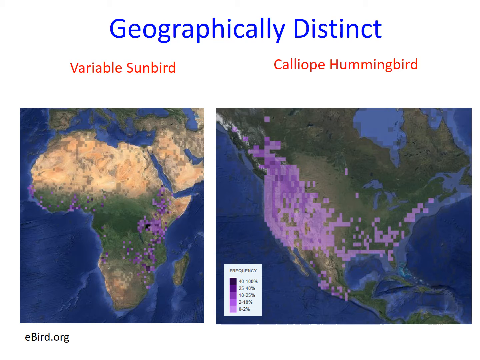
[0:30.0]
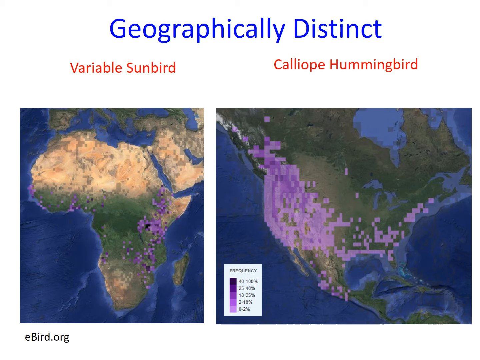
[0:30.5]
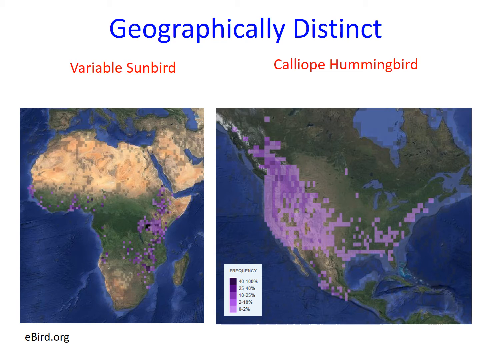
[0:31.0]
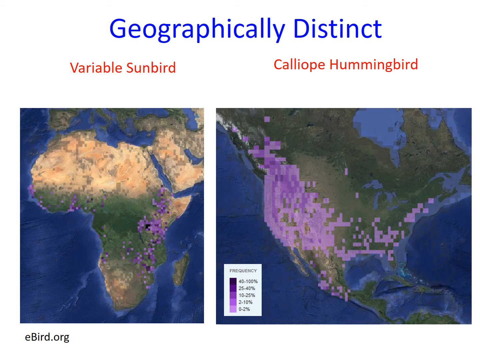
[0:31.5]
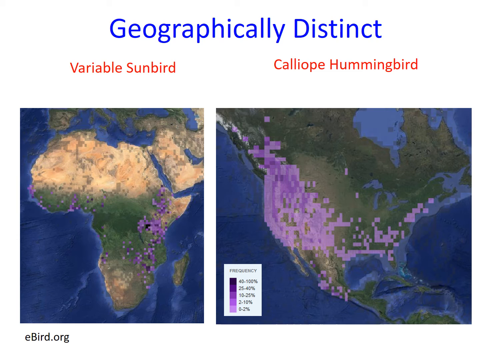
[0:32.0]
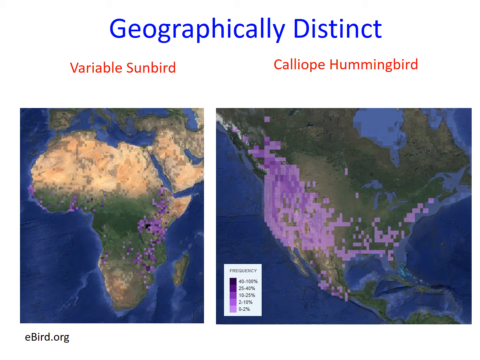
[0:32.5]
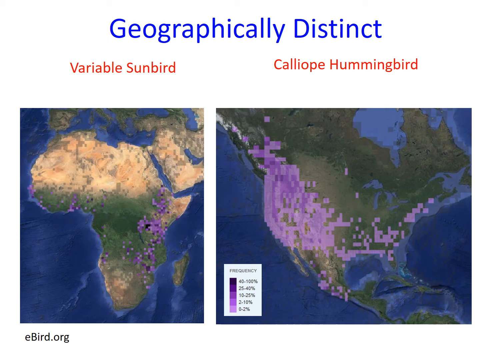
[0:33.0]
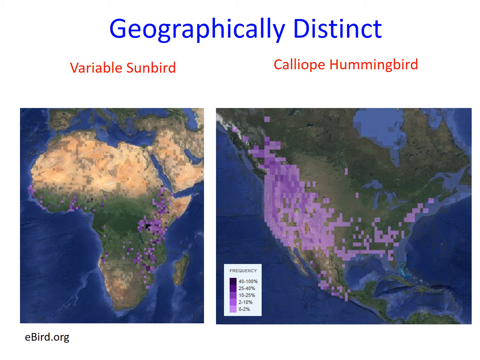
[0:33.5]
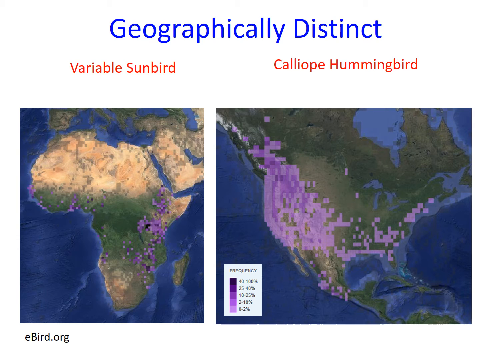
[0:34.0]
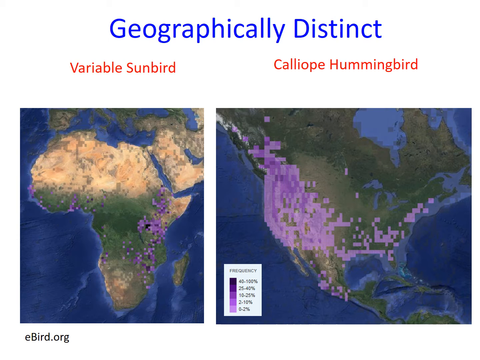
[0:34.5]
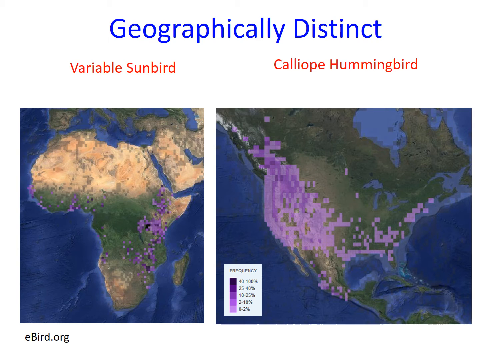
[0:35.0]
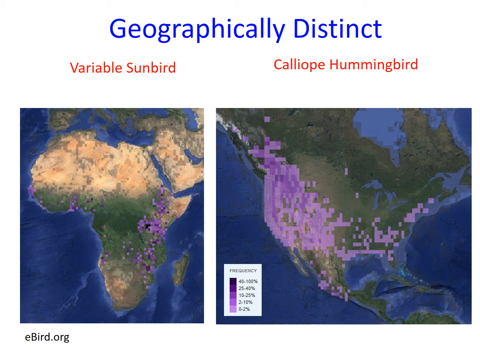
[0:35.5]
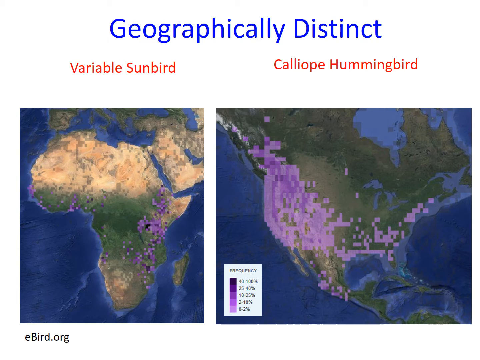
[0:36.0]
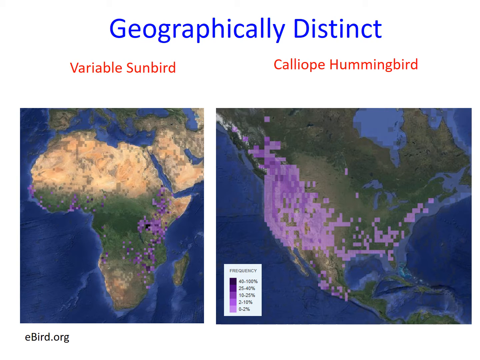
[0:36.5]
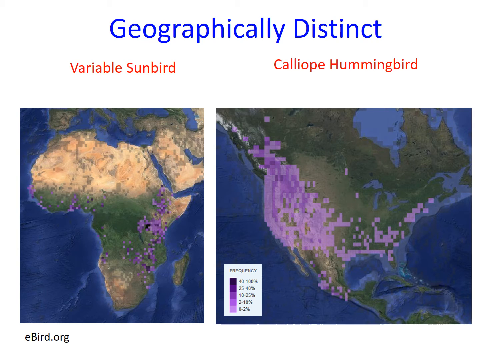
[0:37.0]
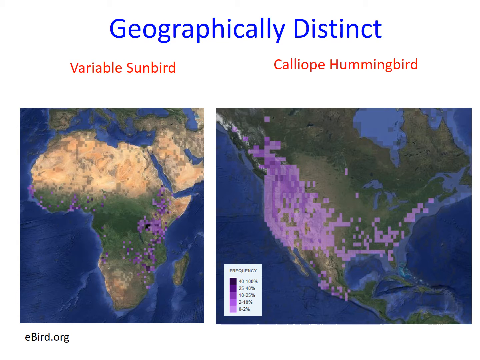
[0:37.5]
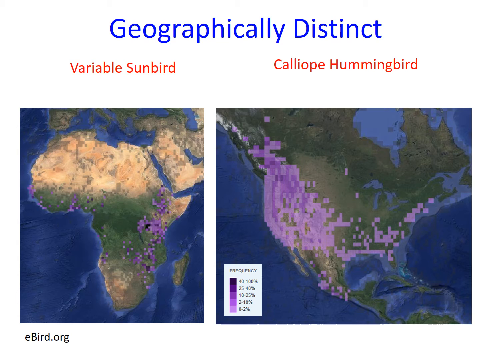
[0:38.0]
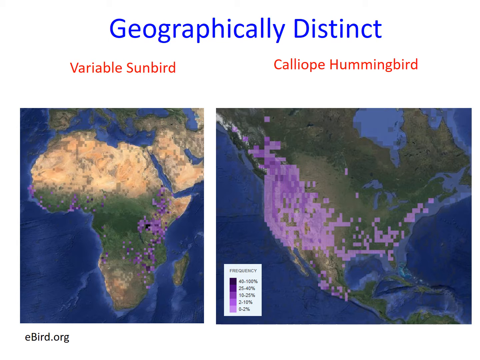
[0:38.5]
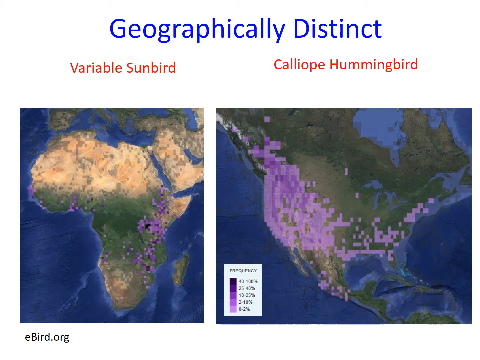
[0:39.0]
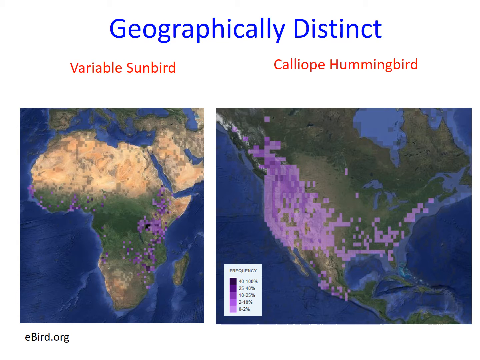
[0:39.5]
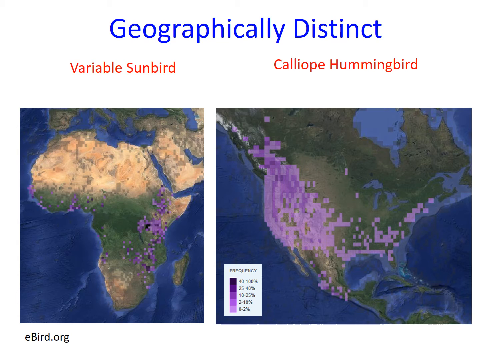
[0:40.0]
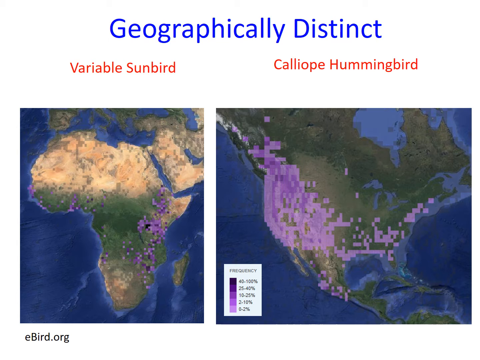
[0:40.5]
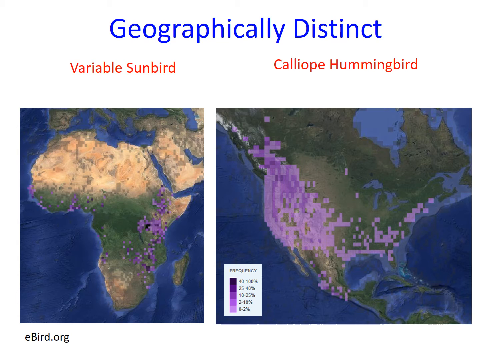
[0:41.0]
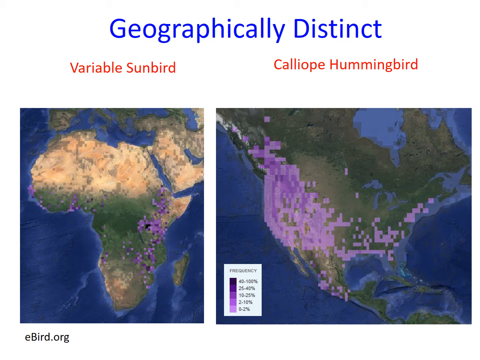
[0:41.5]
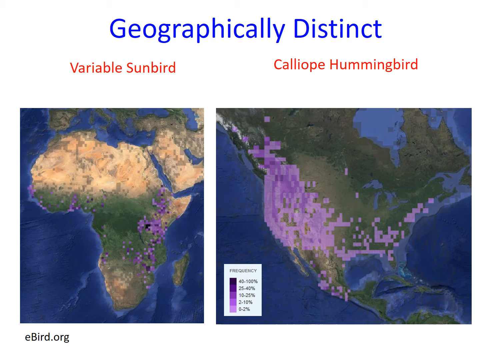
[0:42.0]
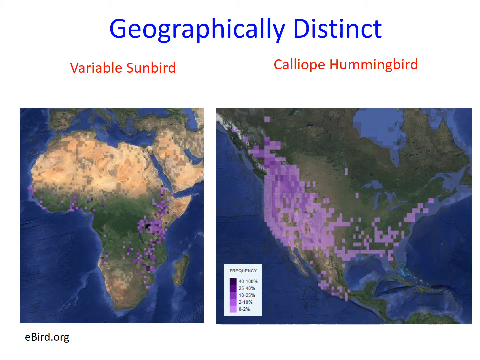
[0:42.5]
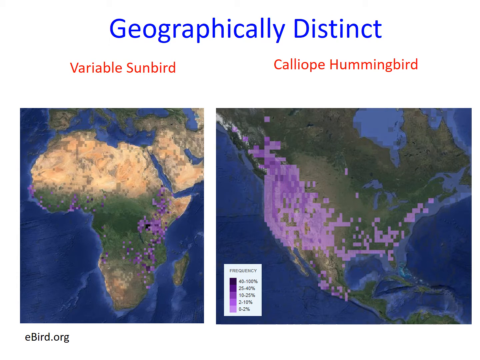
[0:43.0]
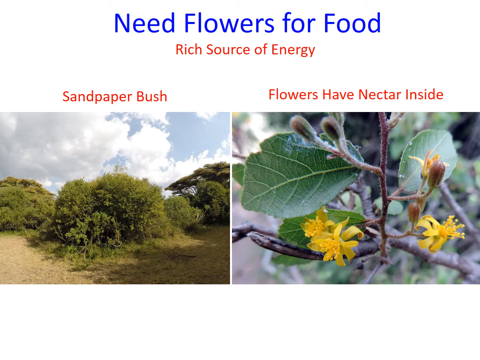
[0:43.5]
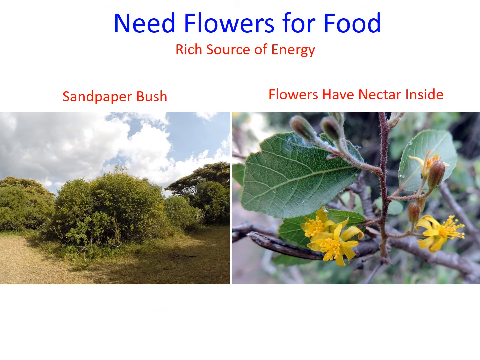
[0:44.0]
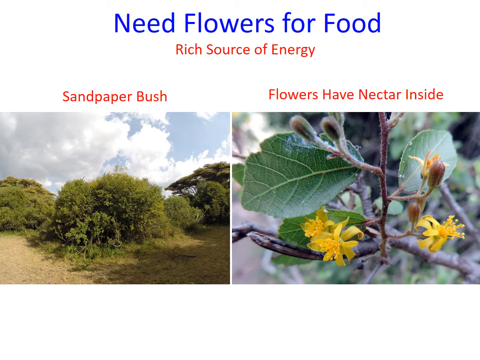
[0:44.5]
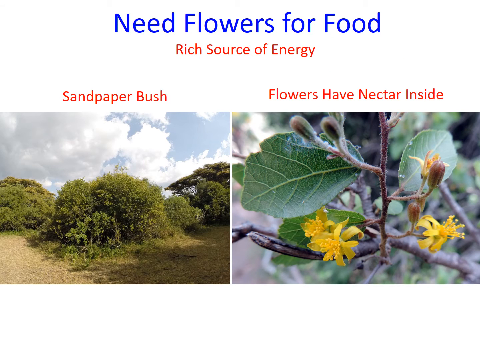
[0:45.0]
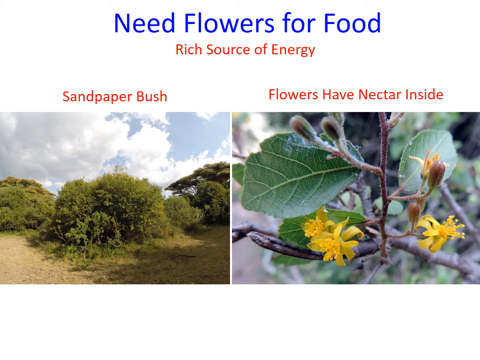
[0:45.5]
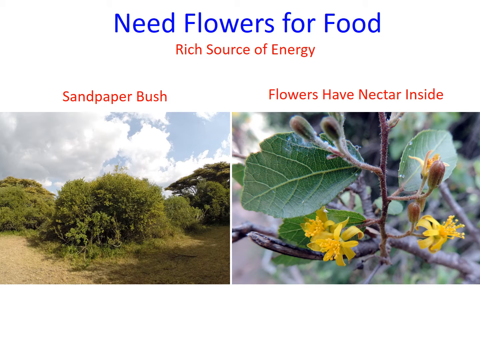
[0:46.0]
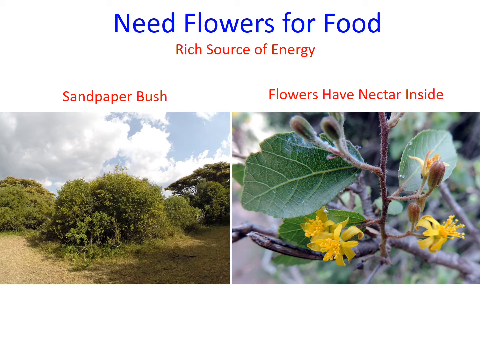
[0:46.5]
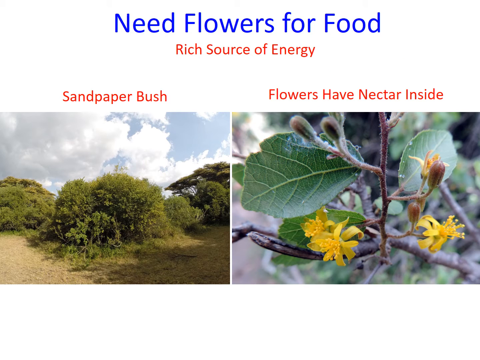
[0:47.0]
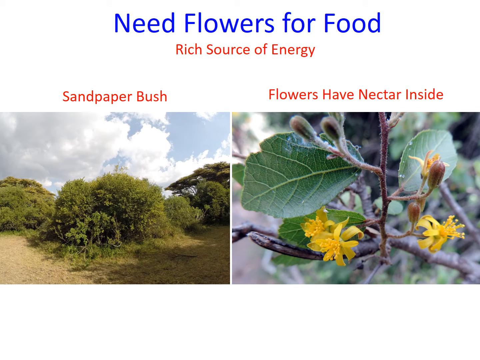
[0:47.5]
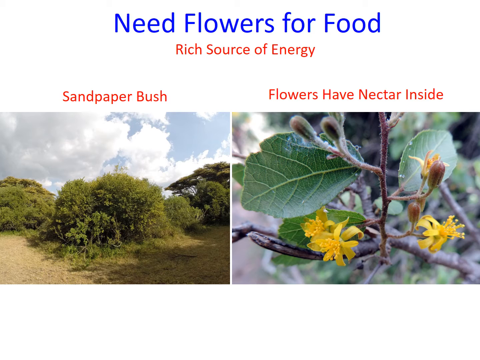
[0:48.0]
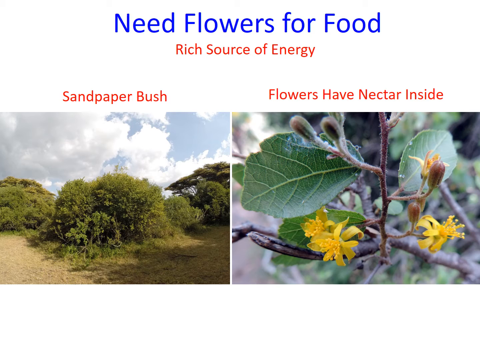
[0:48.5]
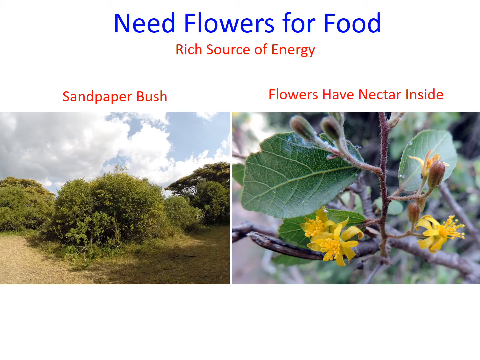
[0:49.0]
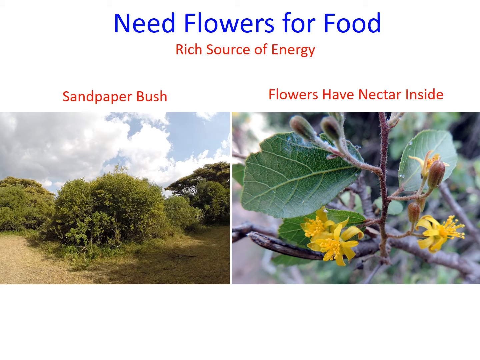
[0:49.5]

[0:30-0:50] Two maps contrast Africa and the Americas. On Africa, a number of purple dots mark the locations of the variable sunbird, and purple dots appear across both maps. The maps are realistic, with green land areas and blue ocean surrounding the continents. Two bushes are then shown with a label, followed by text reading "flowers have a nectar inside."